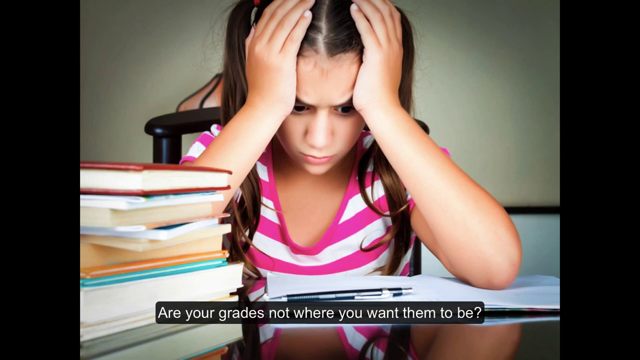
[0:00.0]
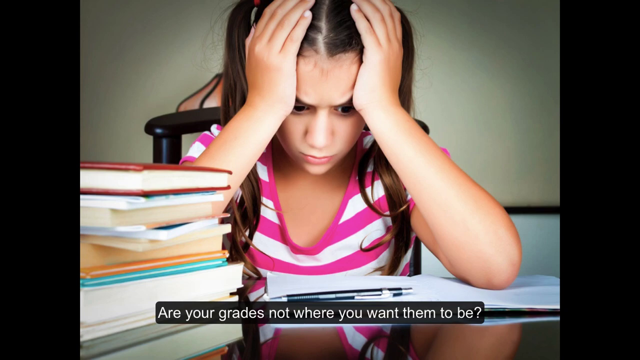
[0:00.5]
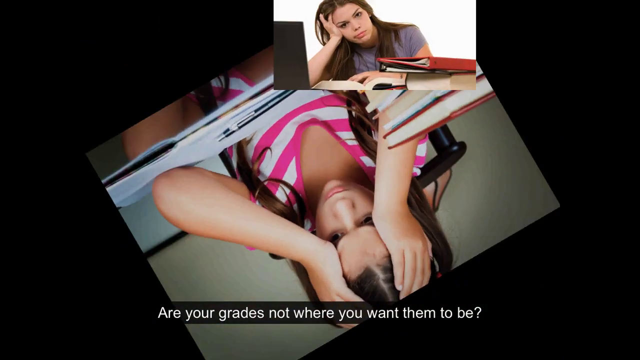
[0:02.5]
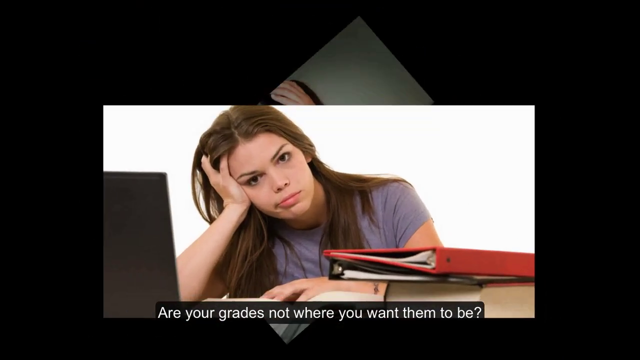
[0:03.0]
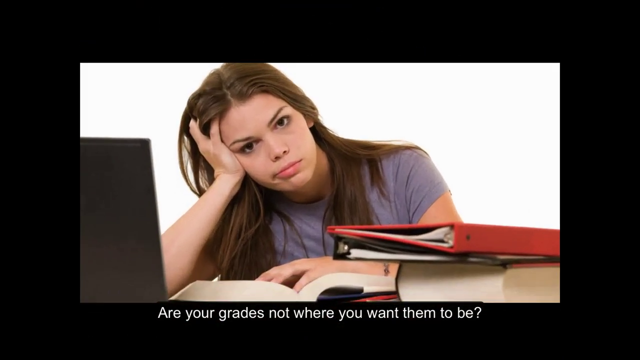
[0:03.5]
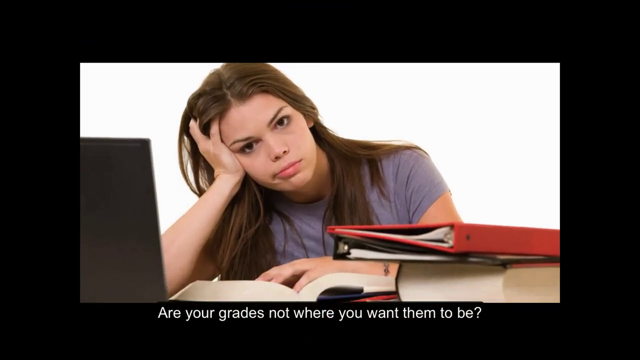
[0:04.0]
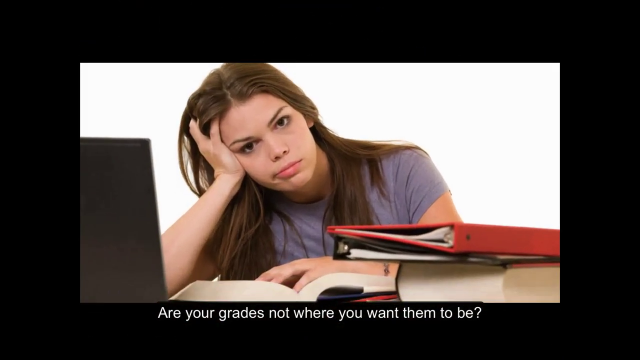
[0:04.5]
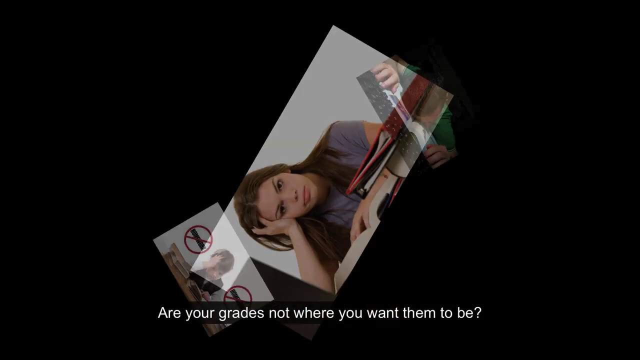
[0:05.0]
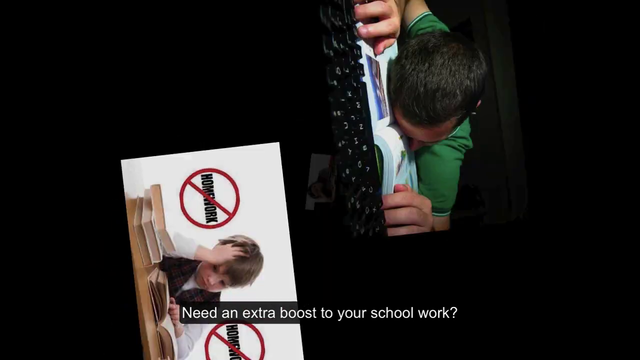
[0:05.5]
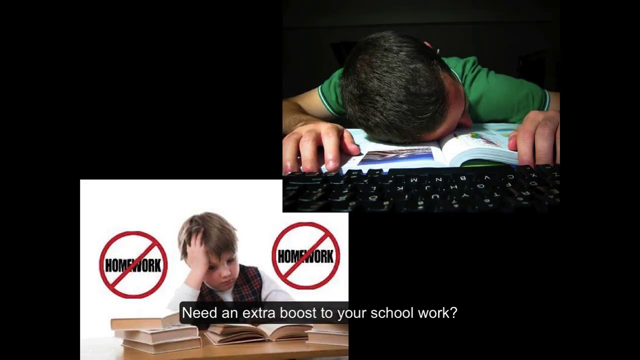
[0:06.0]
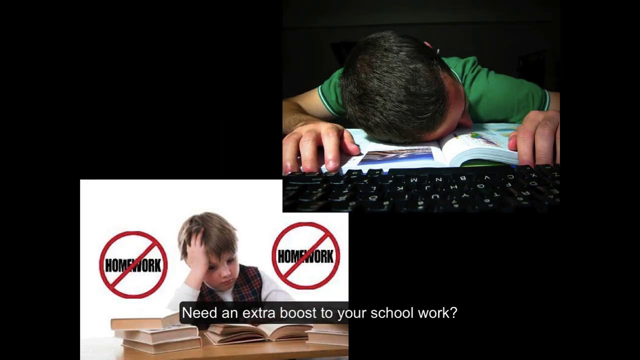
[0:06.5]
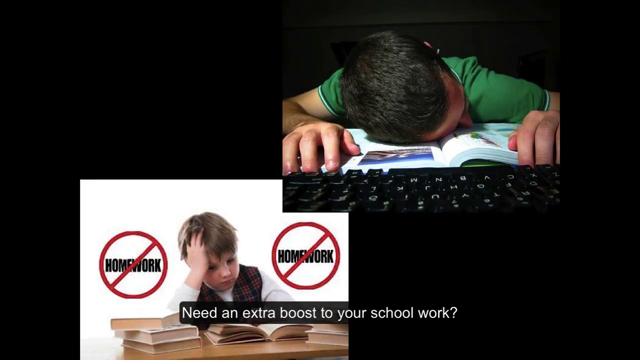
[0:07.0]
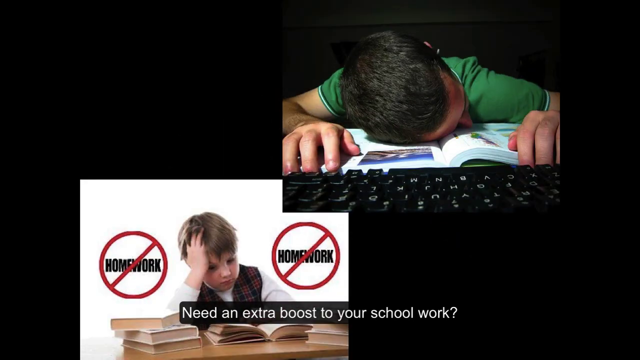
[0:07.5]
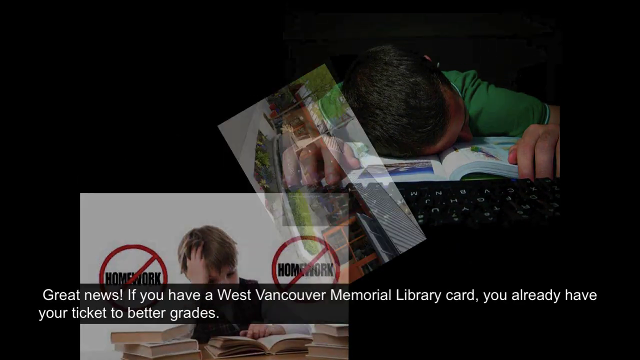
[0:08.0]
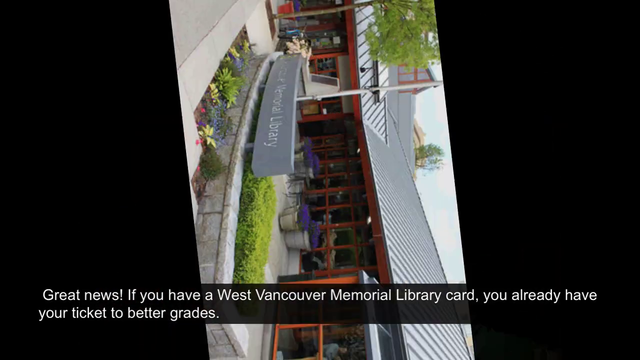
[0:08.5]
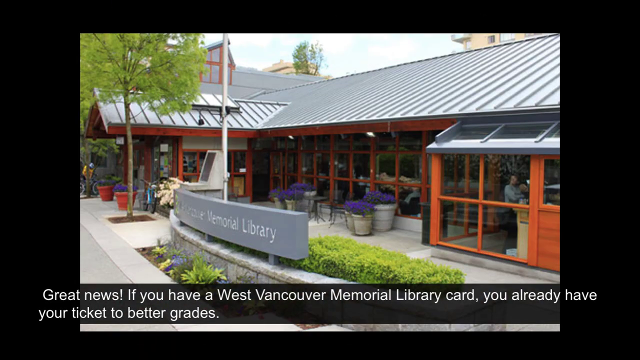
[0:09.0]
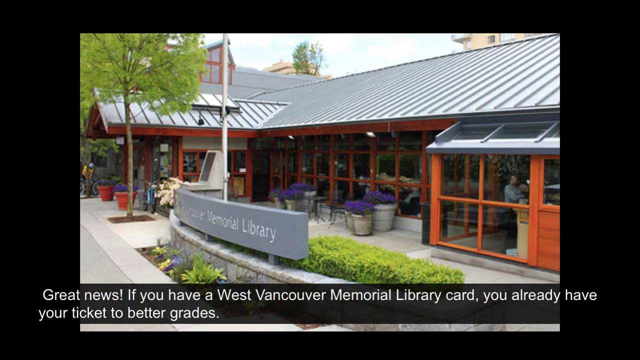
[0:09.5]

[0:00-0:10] A young woman, probably around 16 to 20, with kind of longish brown hair wears a white shirt with horizontal pink and white stripes. A book appears in a sort of stack or pile of books. In what seems to be an informational, educational-style video, on-screen text reads "are your grades not where they want them to be". Another young woman with kind of medium-length brown hair is shown behind a laptop, looking at it. The video then moves to a screen with a black background showing two young men: one looks tired after studying in a textbook, and the other is shown with two symbols that seem to say no homework.